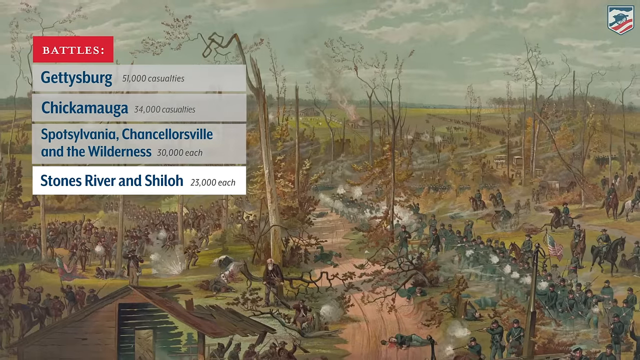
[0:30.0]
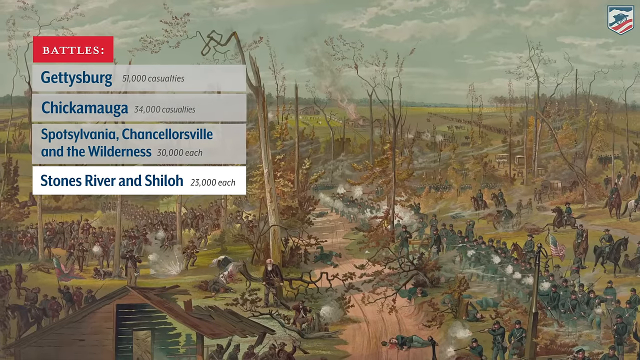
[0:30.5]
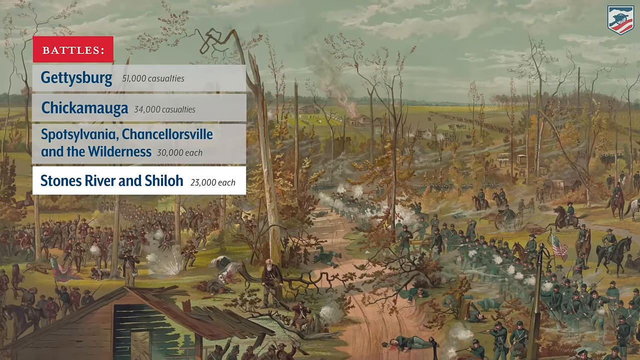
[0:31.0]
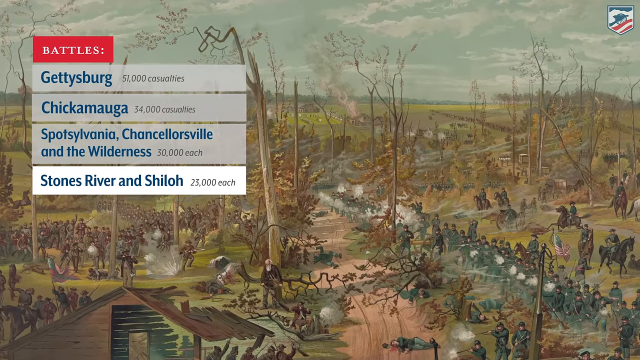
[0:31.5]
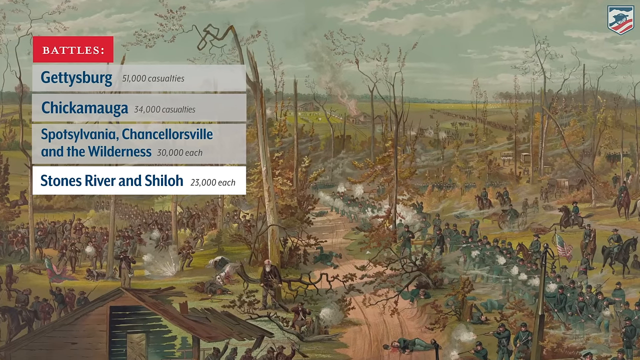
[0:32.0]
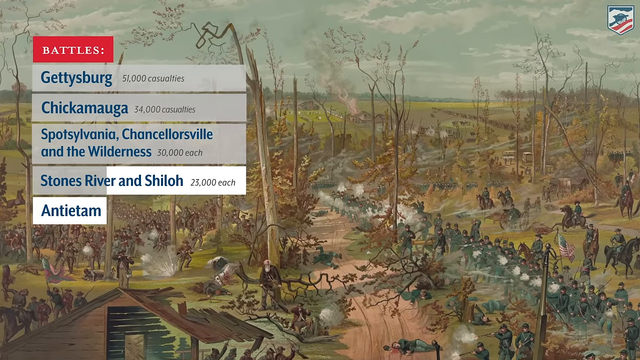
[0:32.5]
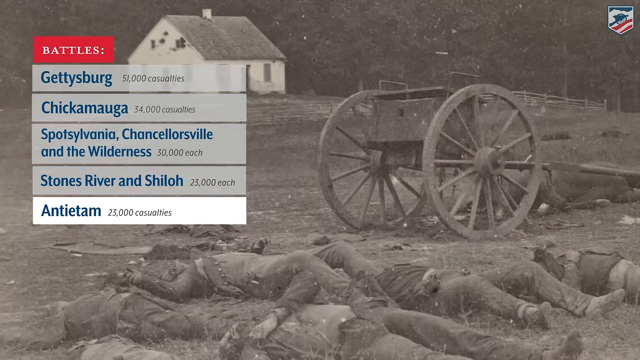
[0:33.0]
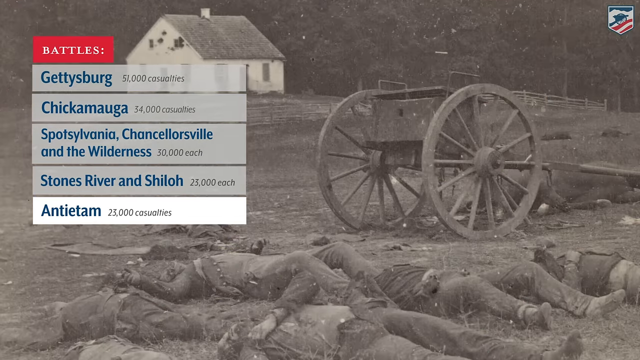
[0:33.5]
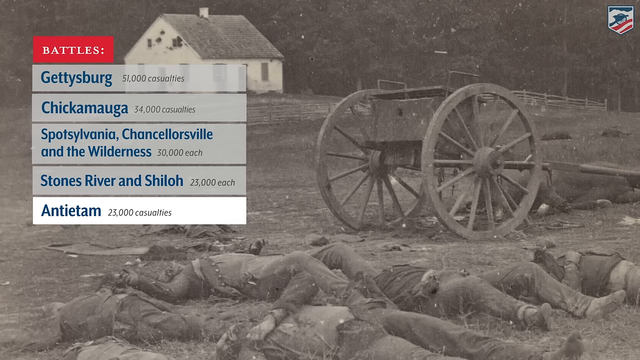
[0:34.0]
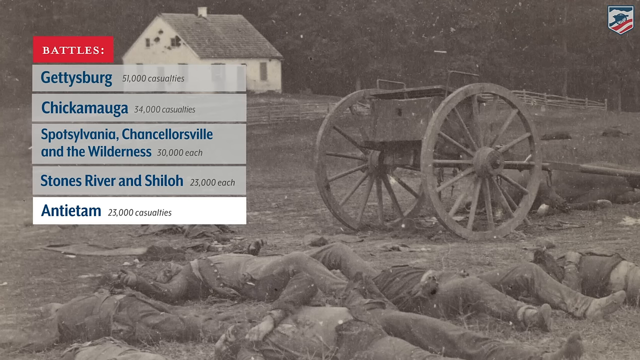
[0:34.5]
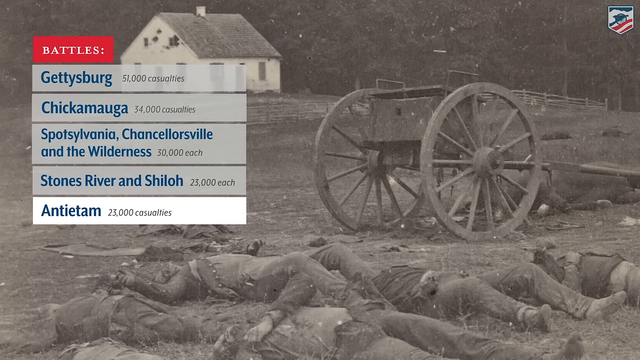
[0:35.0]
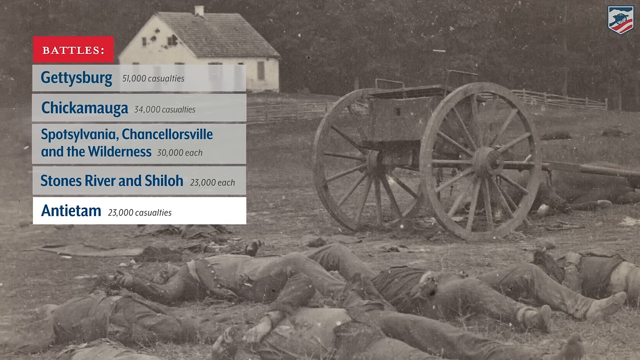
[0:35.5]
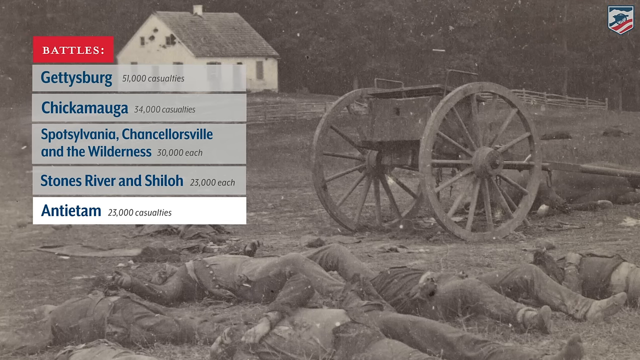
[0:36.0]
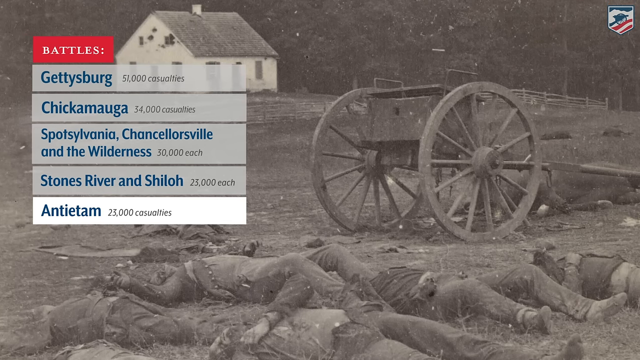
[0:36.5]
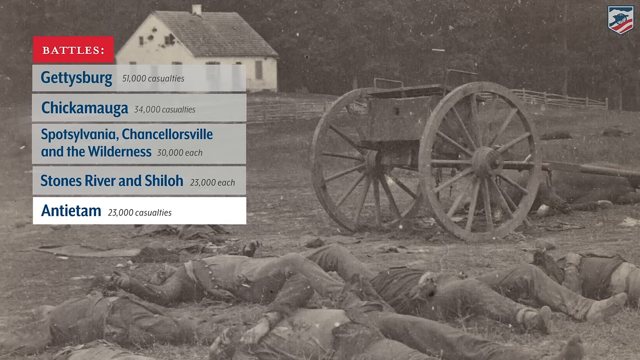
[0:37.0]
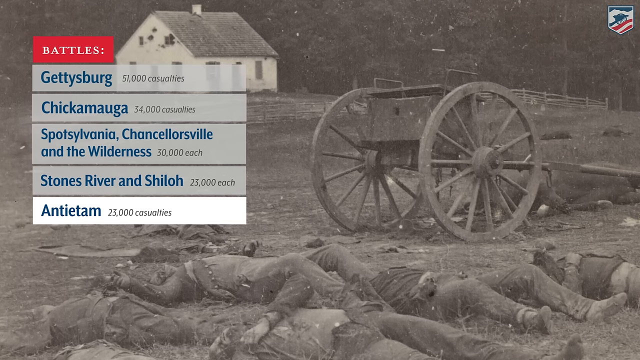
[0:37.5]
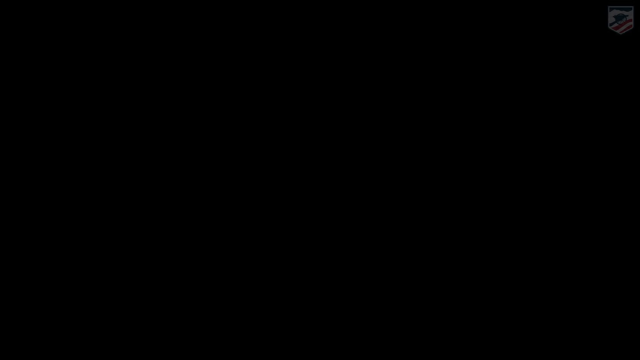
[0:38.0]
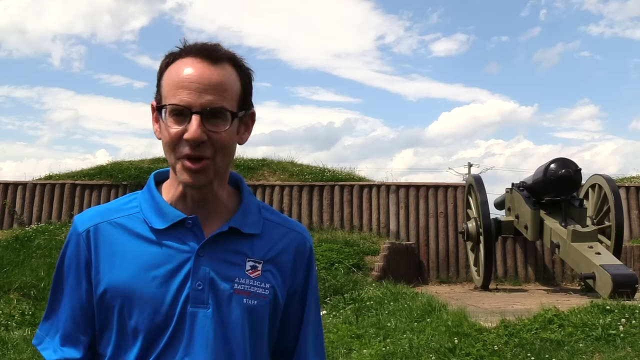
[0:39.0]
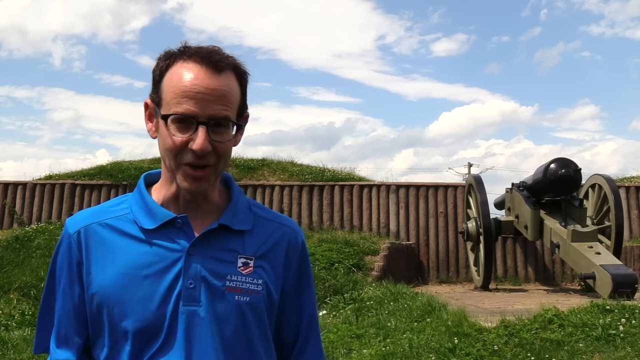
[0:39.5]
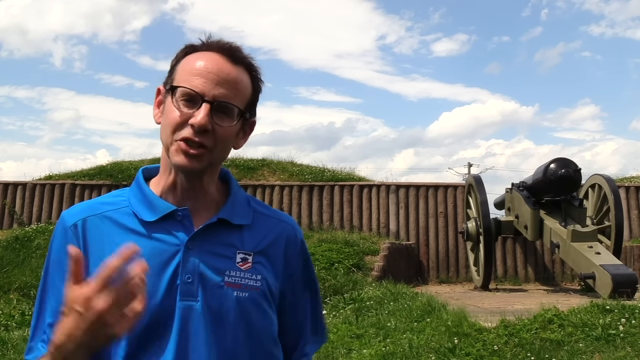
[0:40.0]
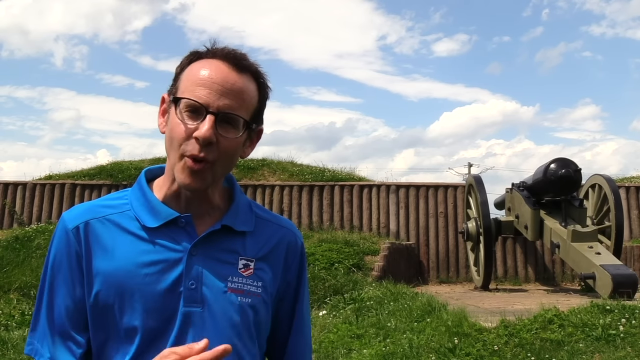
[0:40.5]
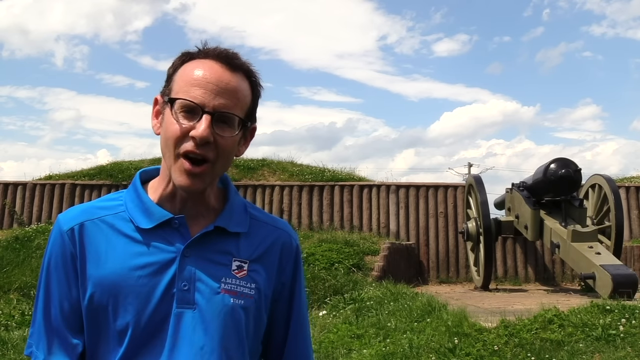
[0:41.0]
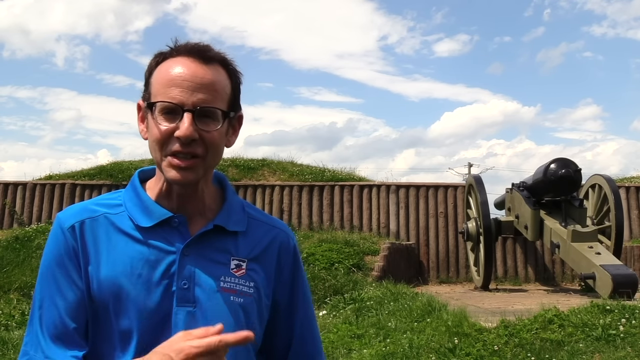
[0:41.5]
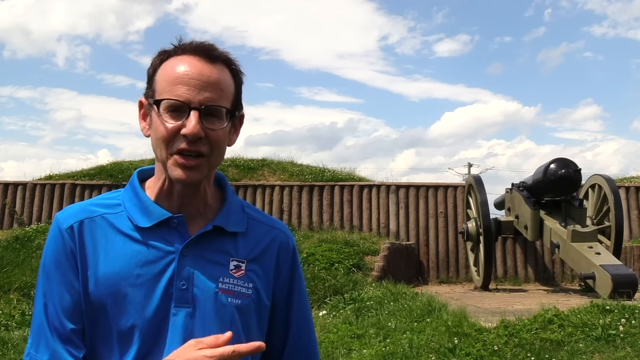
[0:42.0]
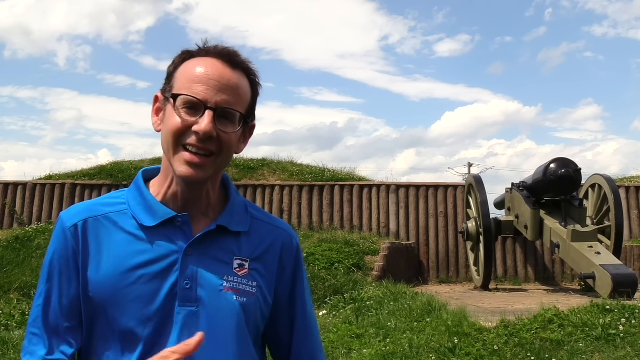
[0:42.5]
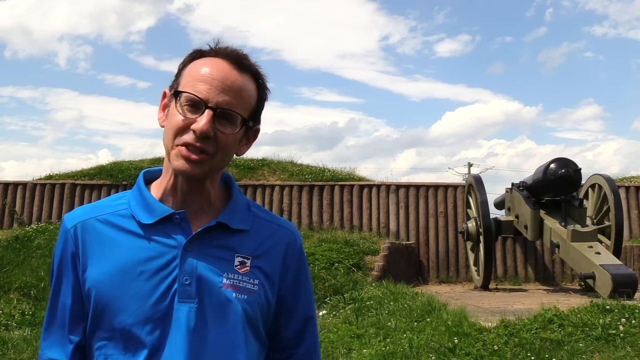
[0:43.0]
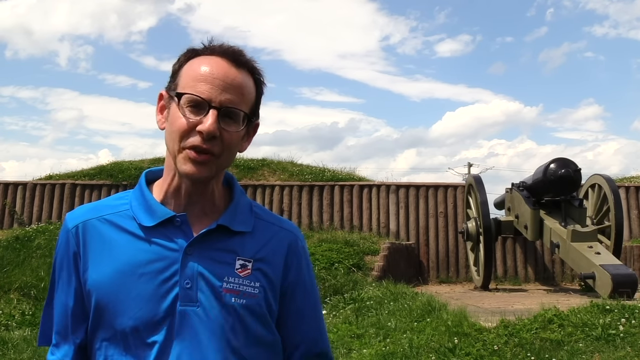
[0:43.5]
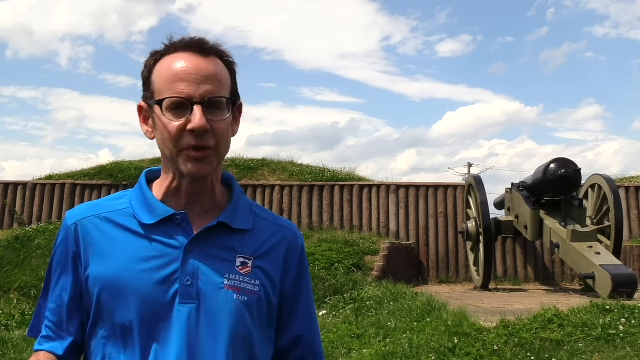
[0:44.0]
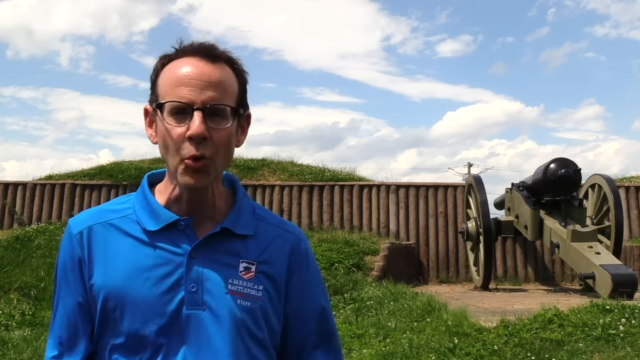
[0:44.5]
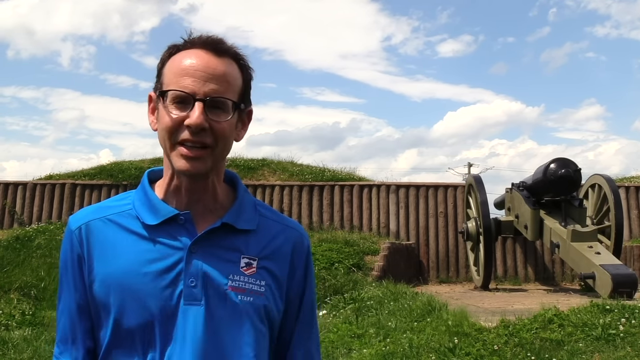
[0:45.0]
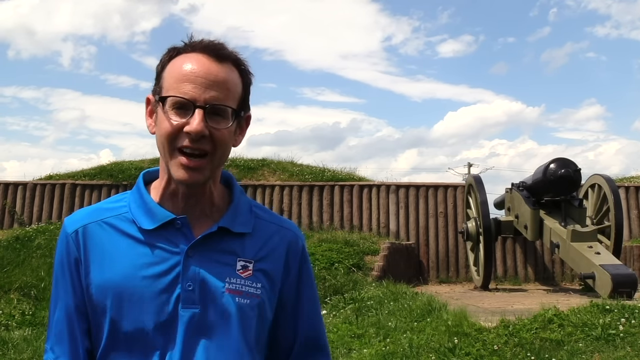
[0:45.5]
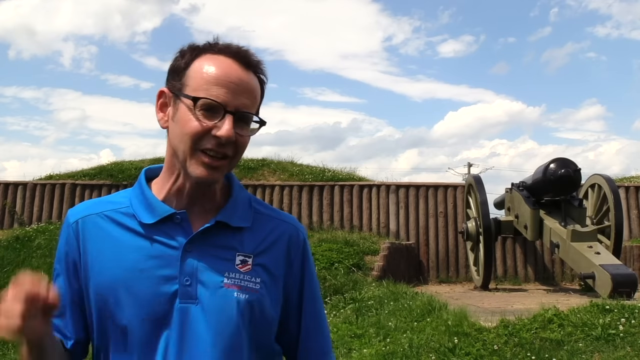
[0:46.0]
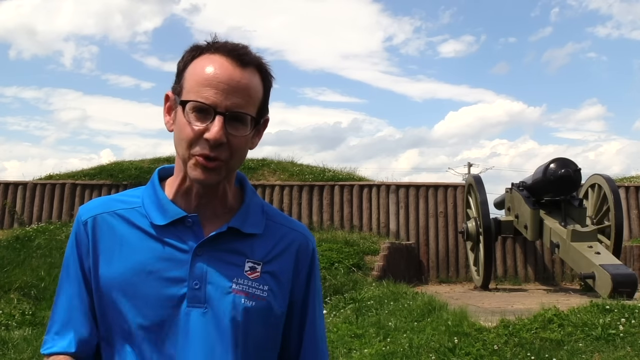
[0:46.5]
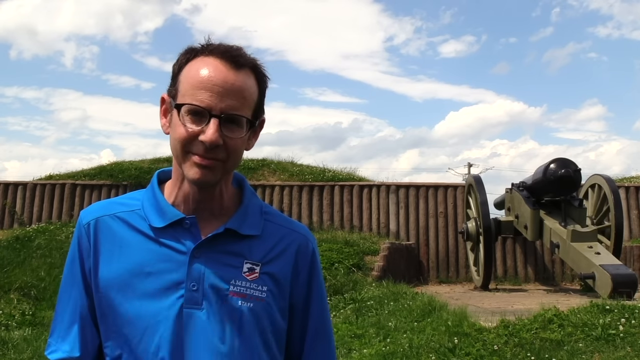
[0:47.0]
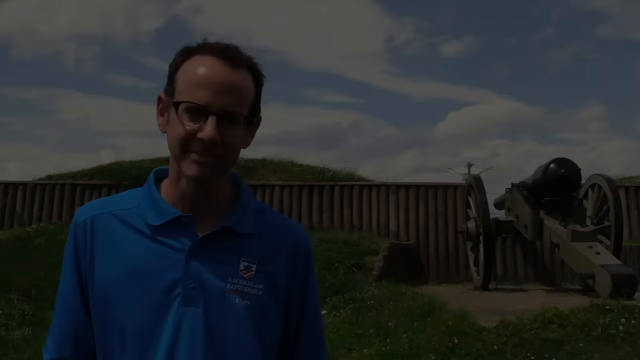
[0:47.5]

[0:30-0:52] Illustrations of what seem to be battles are shown. They are like hand-drawn images painted a little, possibly a combination of both, and have some detail. The style is not from today and seems to be from maybe over 50 years ago. Next comes what seems to be a real picture of individuals lying down who look like they died, apparently in a war. Text that apparently reads "Anteheim" appears before the screen fades to black. Then a man appears who seems to be a guide of sorts. He wears a blue collared shirt with the top button undone and an emblem on the left chest area, and he has glasses, is slightly balding, and appears to be in his mid-40s. He is speaking outside. On the right-hand side there is what seems to be a cannon, possibly a replica, poking out of a barrier that seems to be some type of fence or wooden protective area.